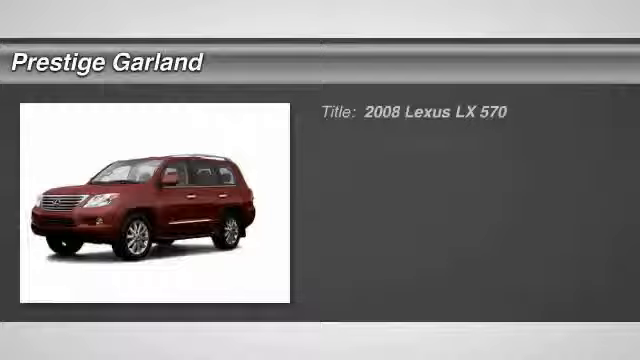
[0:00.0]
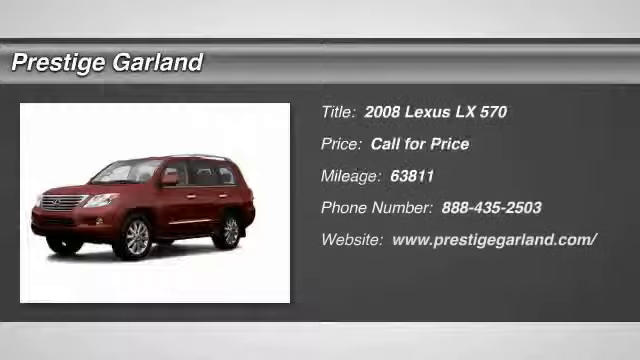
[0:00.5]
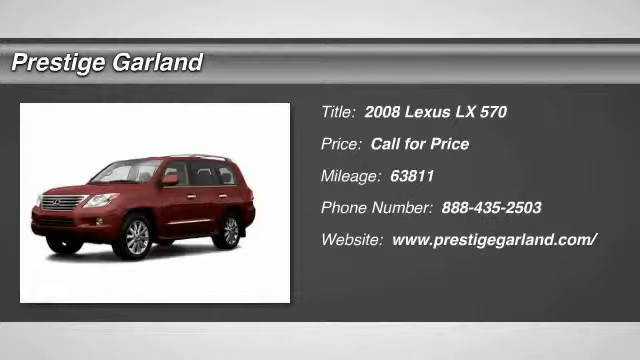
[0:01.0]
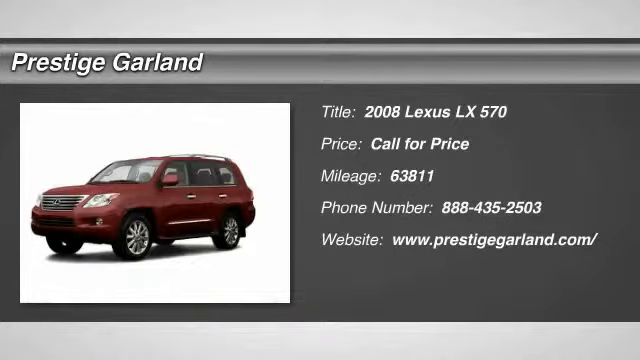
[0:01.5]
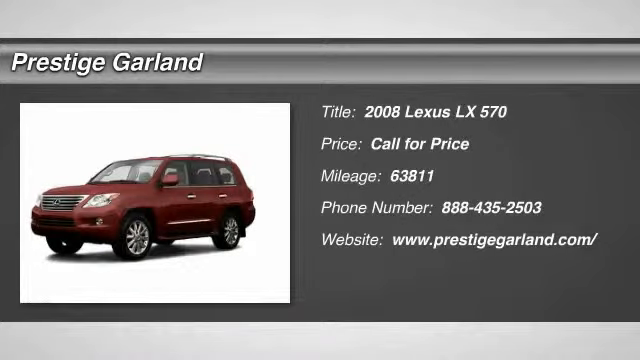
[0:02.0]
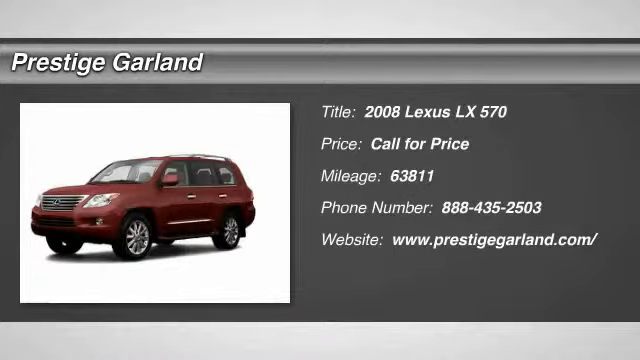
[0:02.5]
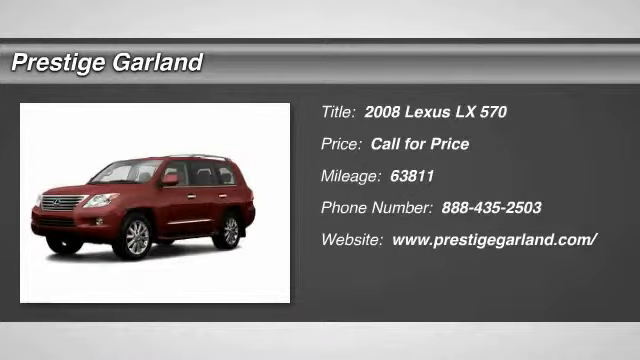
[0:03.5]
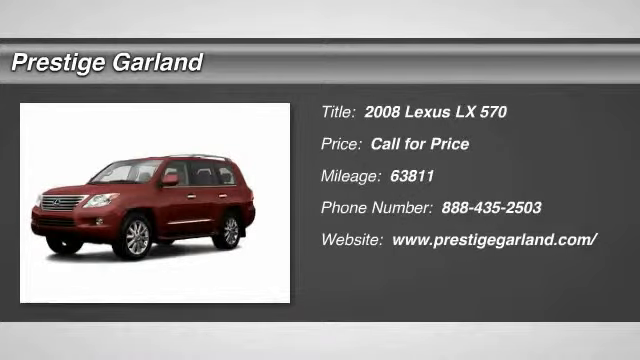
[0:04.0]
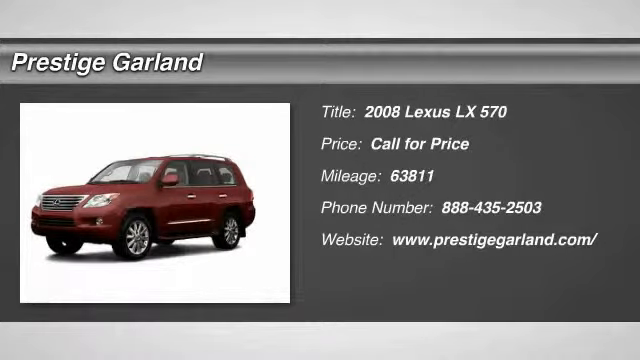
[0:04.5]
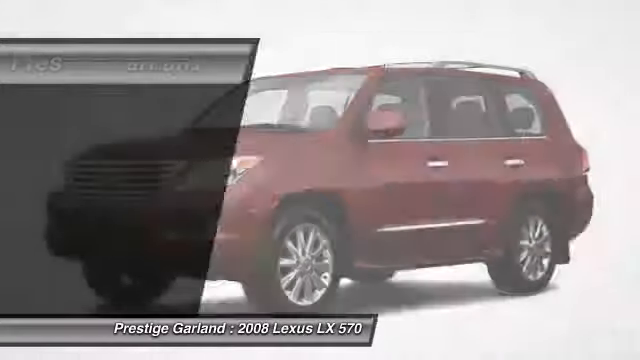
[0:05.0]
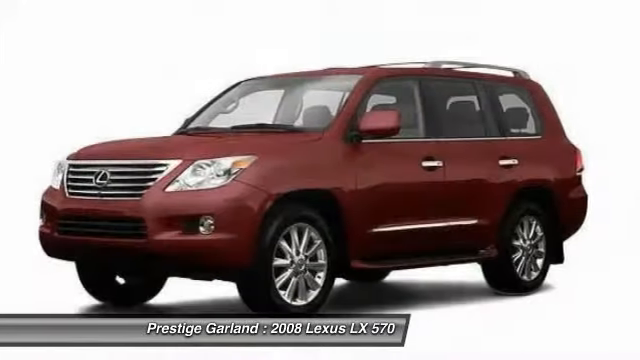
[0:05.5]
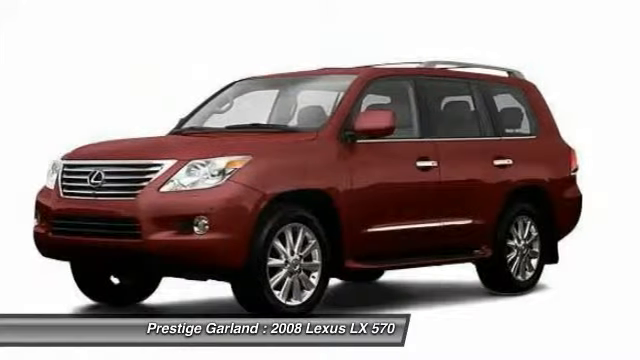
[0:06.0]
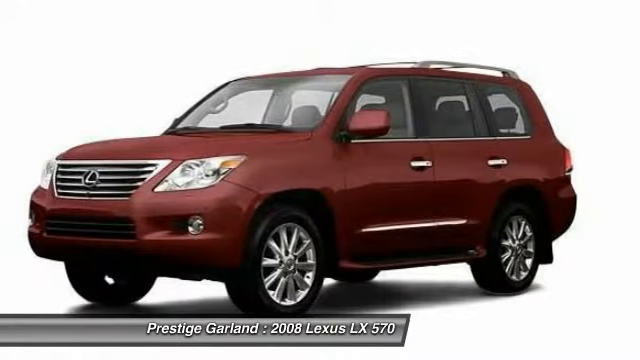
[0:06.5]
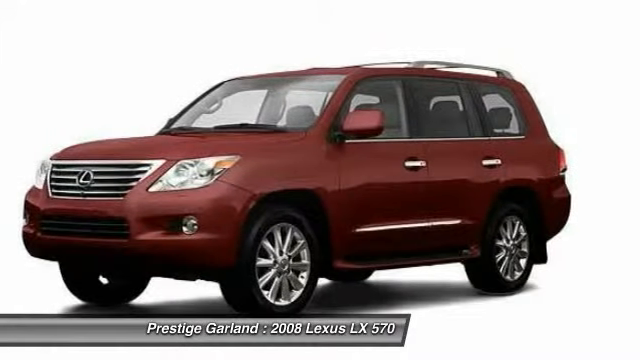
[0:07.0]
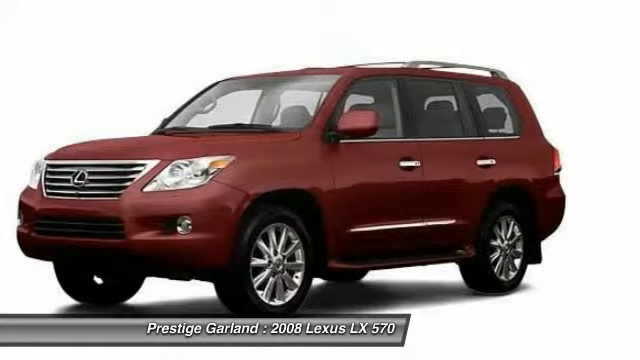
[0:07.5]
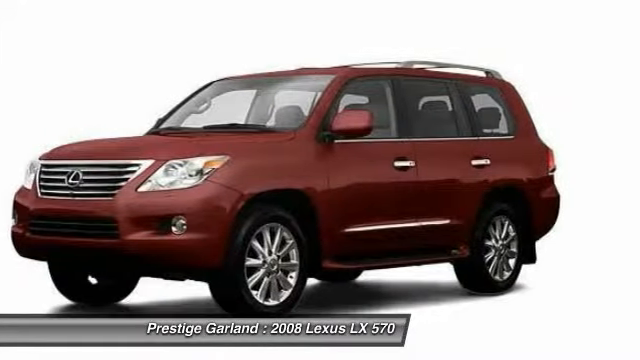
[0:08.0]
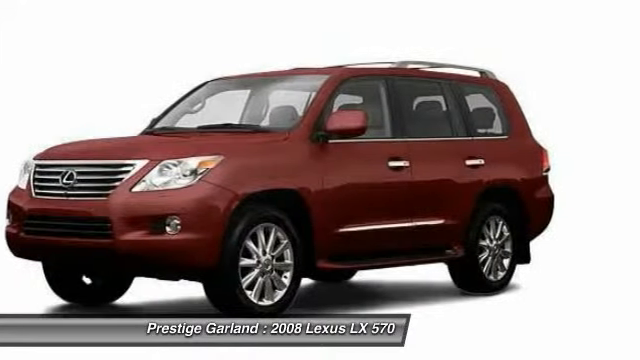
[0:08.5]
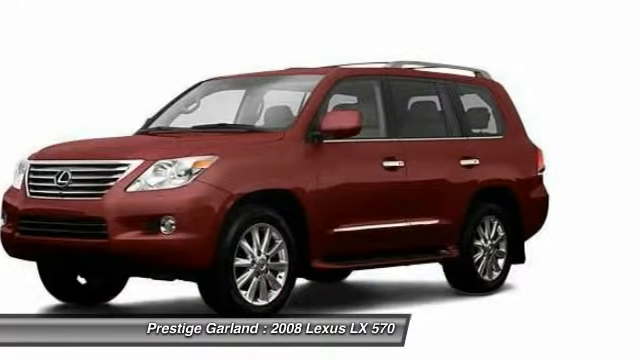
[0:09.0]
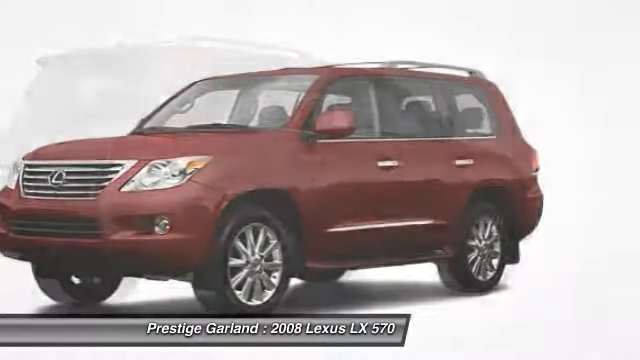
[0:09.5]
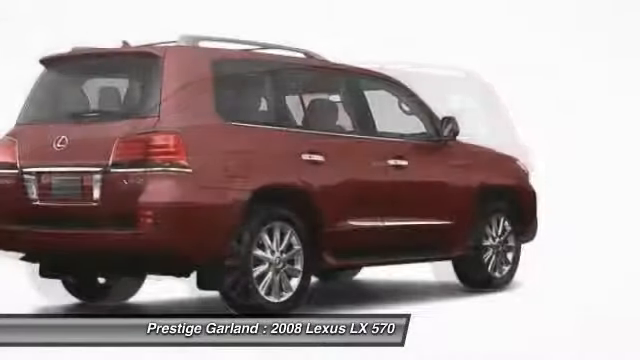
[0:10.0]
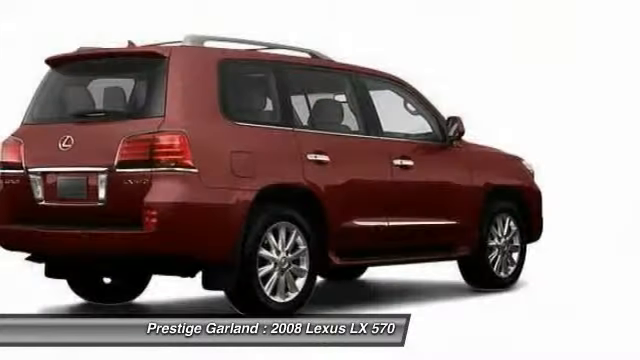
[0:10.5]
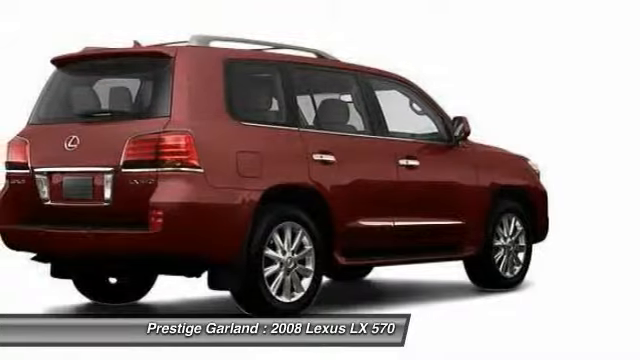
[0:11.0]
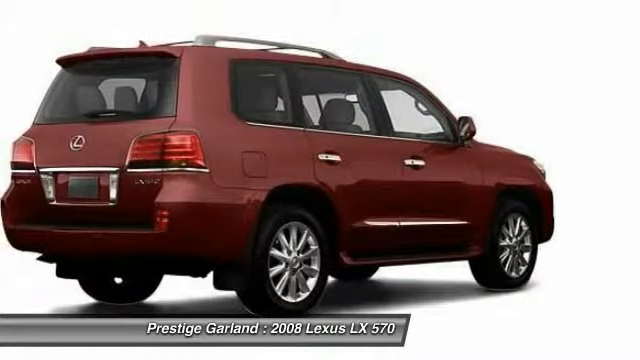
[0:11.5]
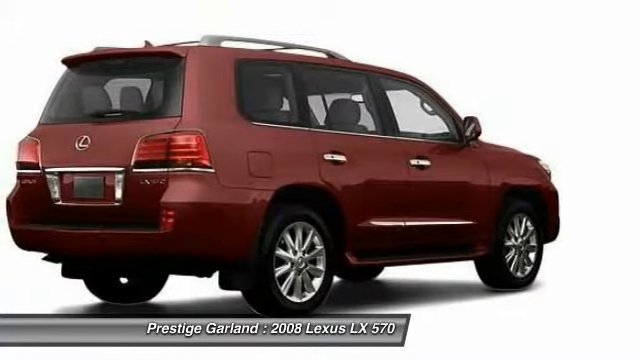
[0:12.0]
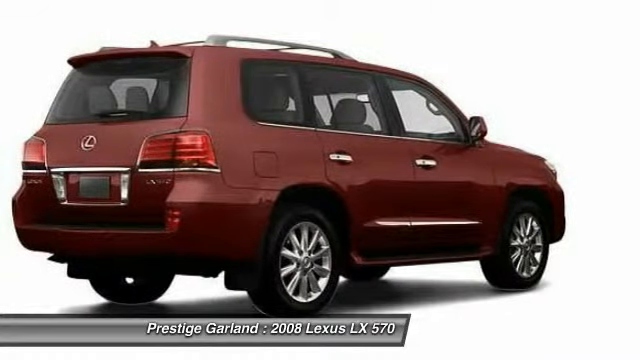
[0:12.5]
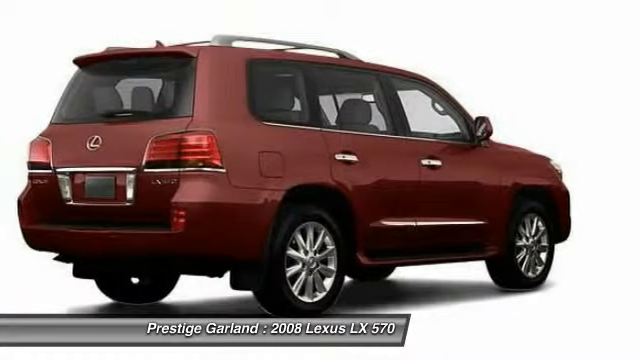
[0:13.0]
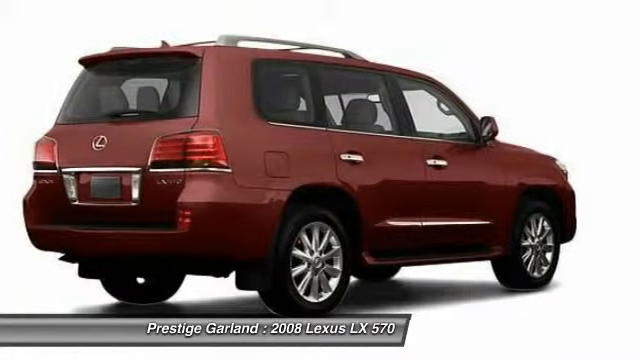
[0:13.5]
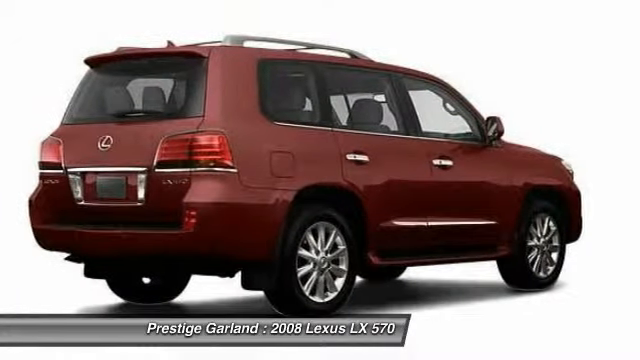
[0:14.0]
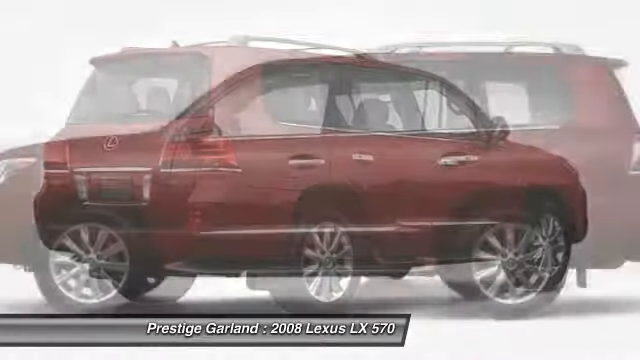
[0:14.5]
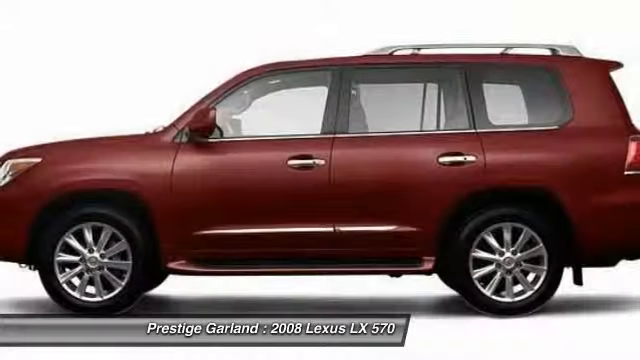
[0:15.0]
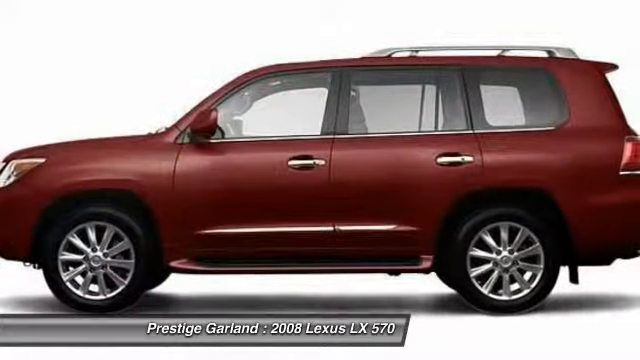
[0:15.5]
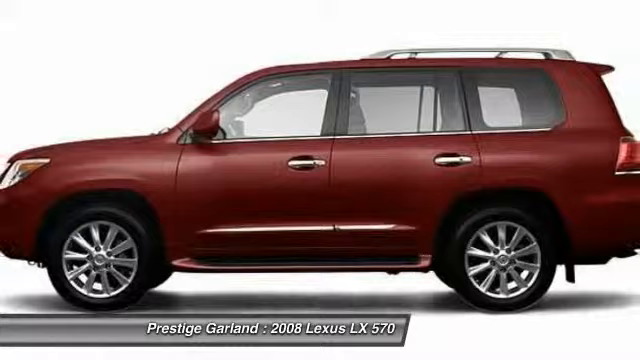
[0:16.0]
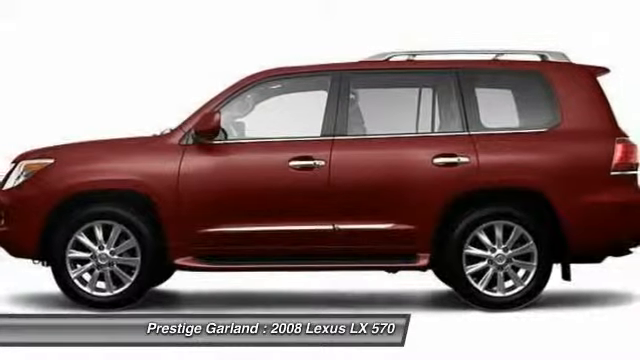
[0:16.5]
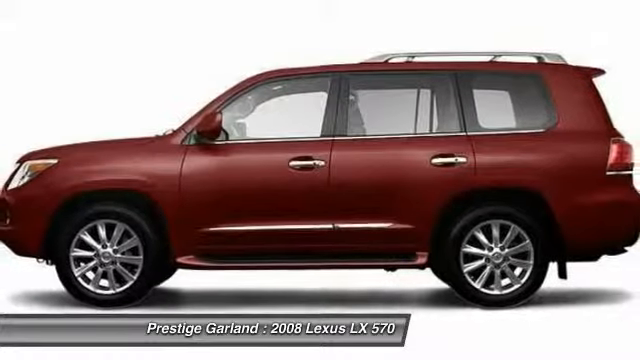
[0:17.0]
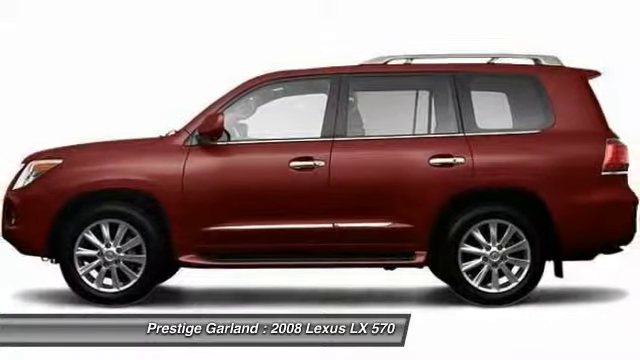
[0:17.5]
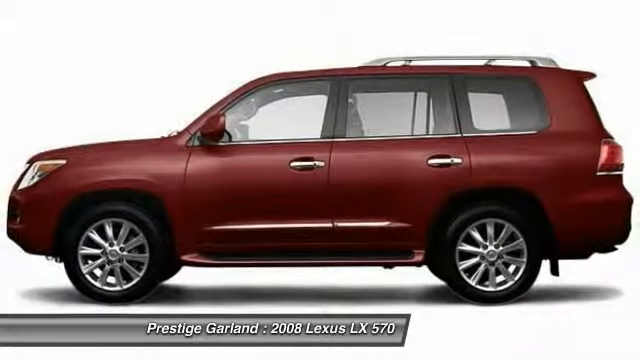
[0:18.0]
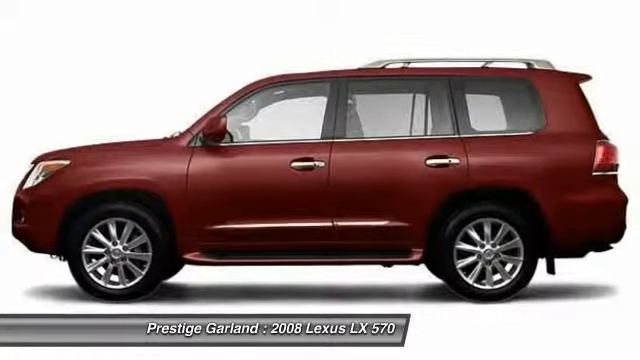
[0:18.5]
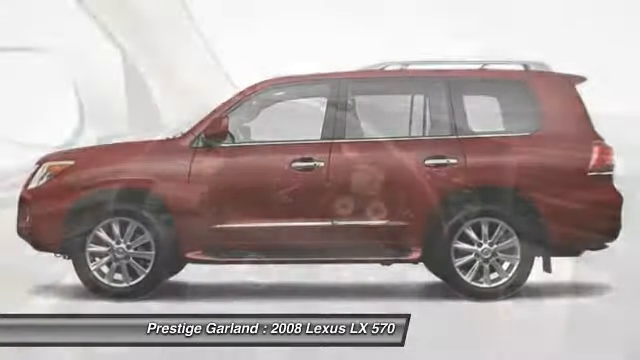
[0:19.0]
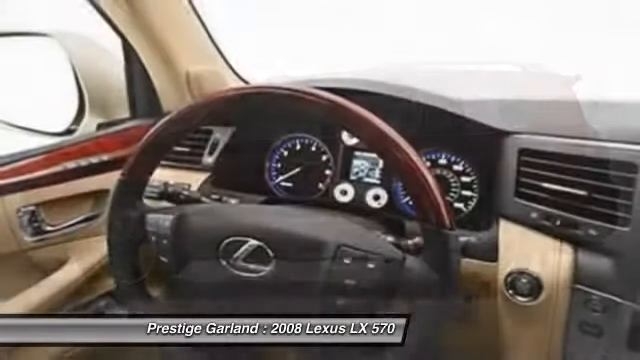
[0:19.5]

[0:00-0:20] The video opens on a white box with a burgundy, four-door SUV inside it. At the top, the text reads "Prestige Garland". On the right, text reads "title 2008 Lexus LX570", "price", "call for price", "mileage", "63,811", along with the phone number 888-435-2503 and the website www.prestigegarland.com. Next comes a very close-up view of the car being sold, shown from multiple sides. Its exterior is a burgundy-reddish color, and it looks very clean. The interior is then shown, with a burgundy steering wheel and gold accents. The door is still a little red, while the inside is more gold and black. The dashboard and steering wheel are visible.